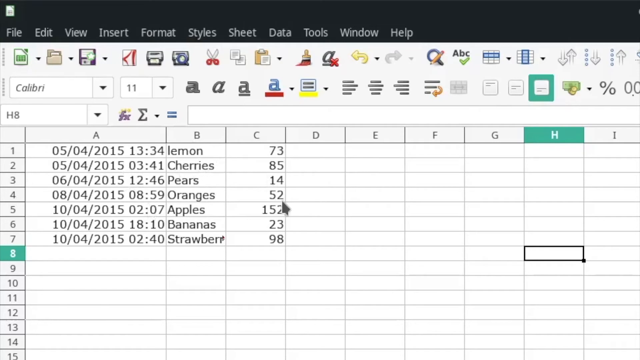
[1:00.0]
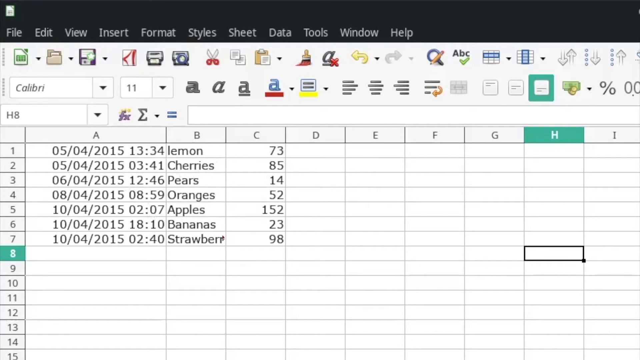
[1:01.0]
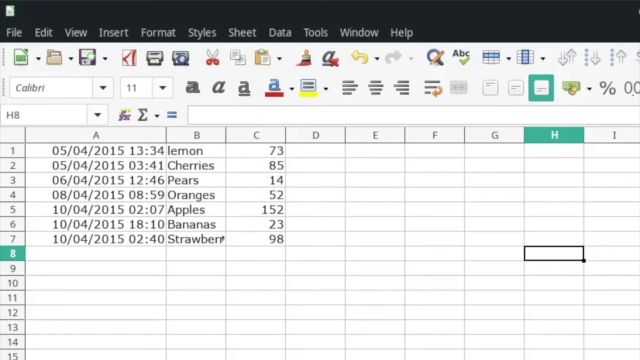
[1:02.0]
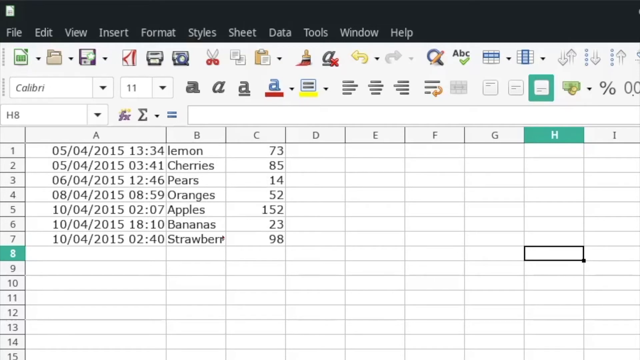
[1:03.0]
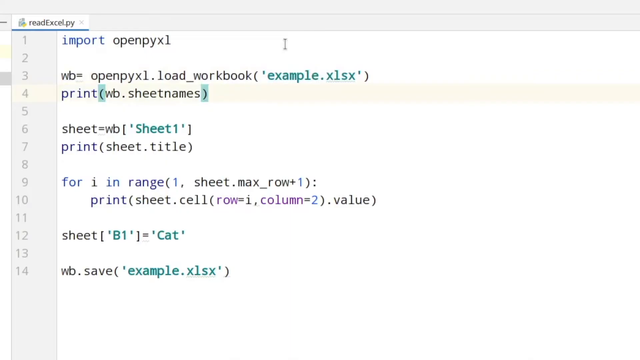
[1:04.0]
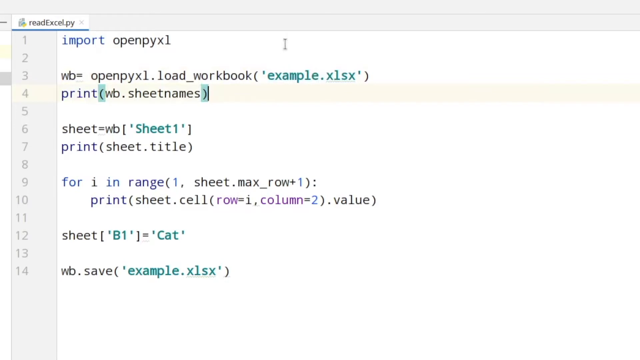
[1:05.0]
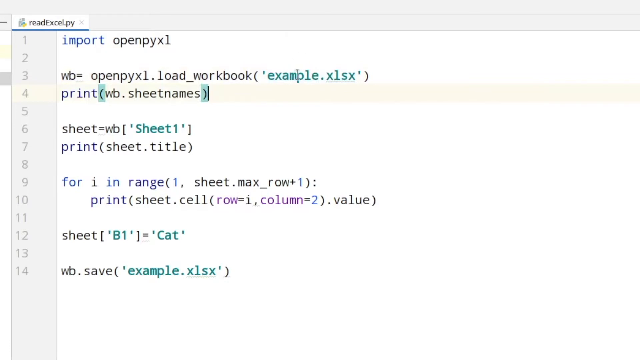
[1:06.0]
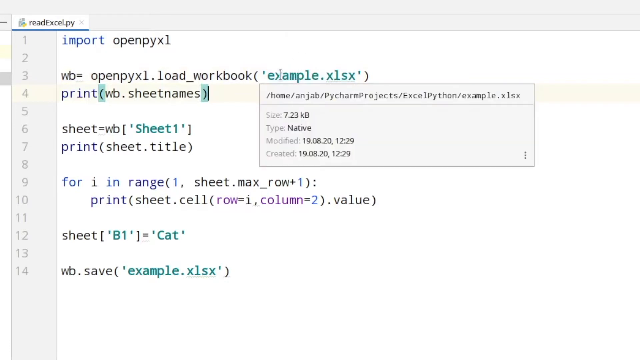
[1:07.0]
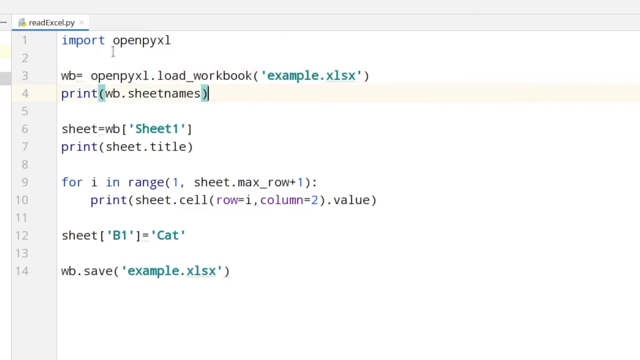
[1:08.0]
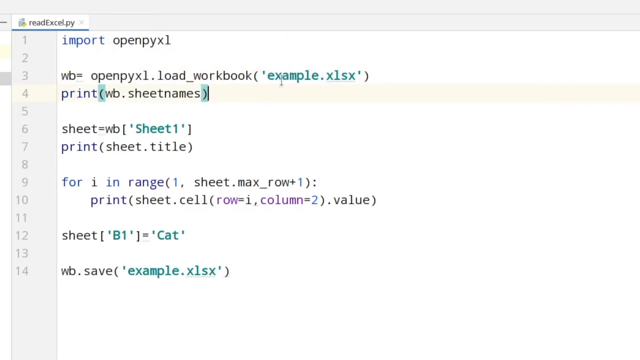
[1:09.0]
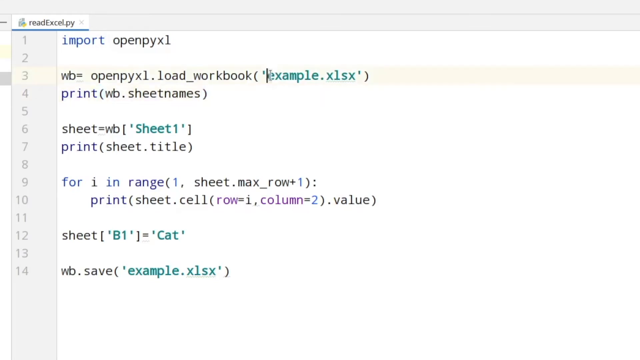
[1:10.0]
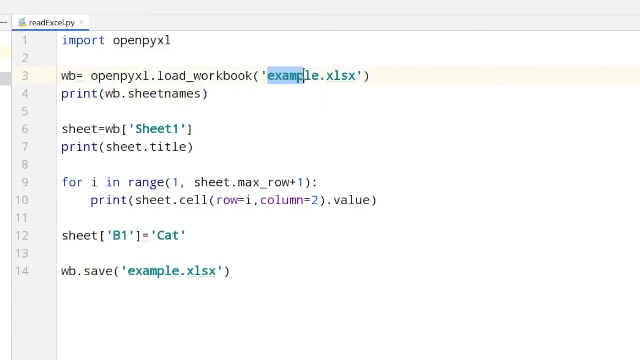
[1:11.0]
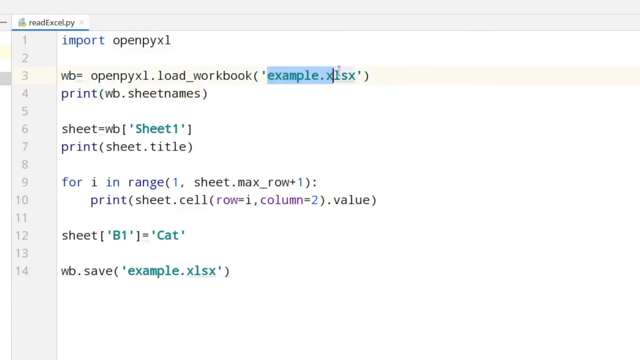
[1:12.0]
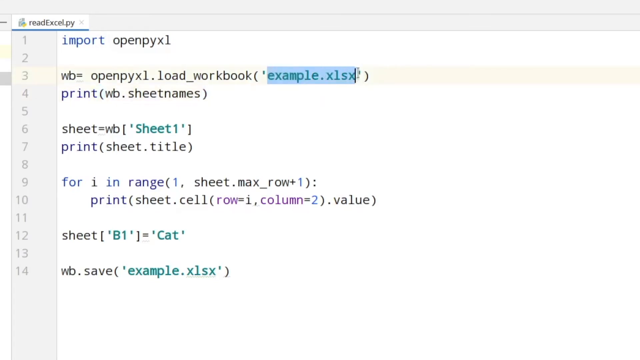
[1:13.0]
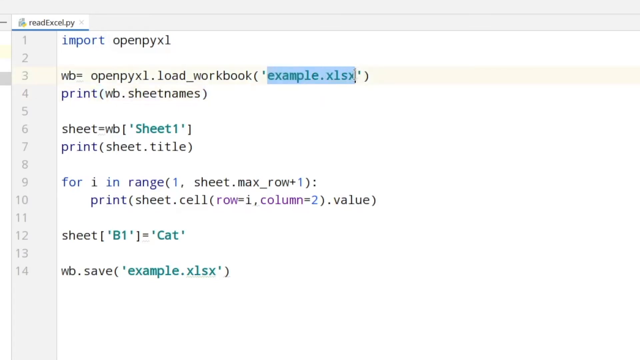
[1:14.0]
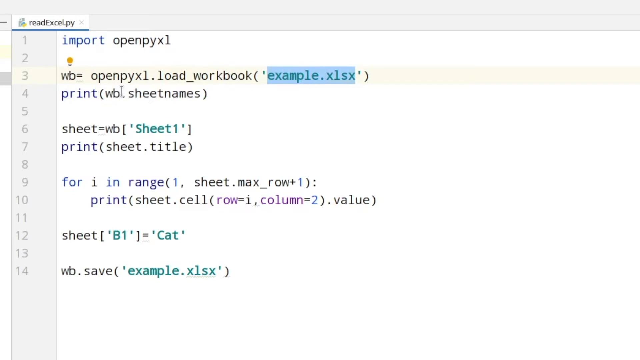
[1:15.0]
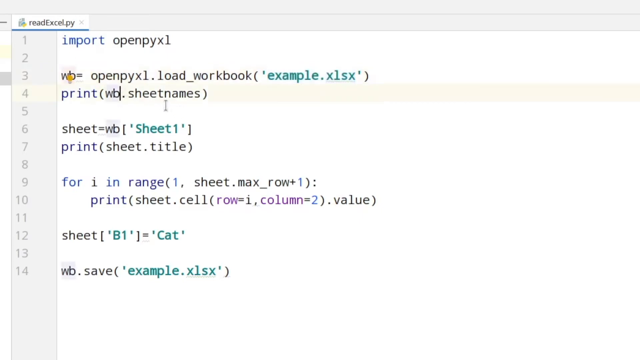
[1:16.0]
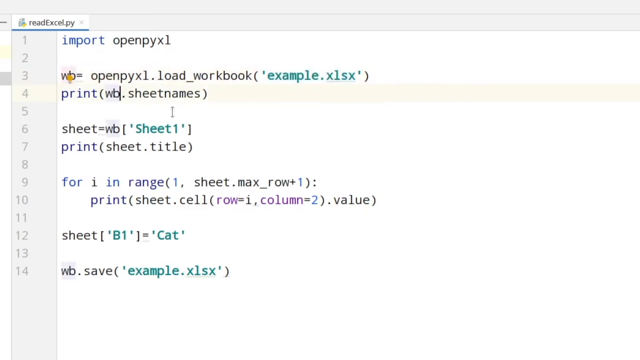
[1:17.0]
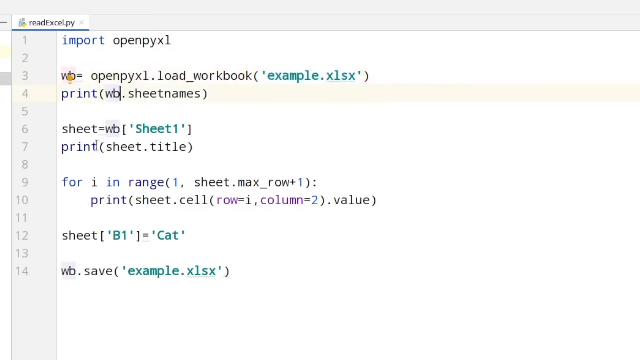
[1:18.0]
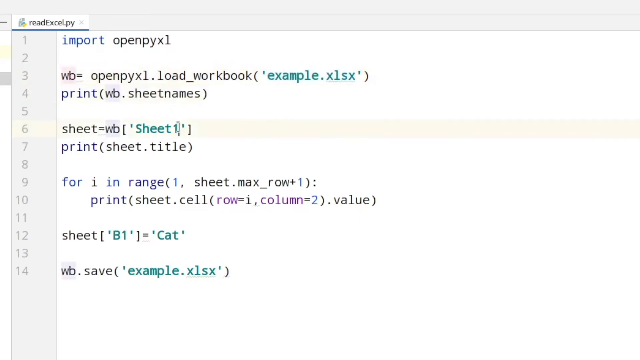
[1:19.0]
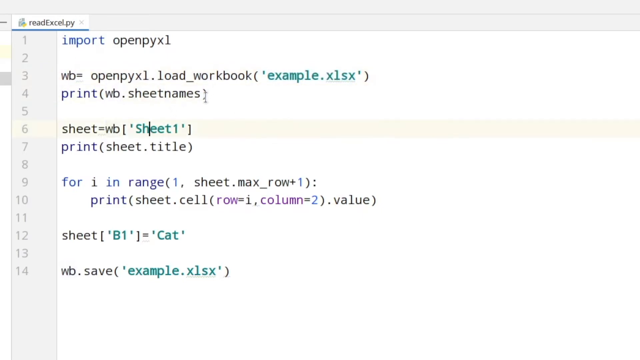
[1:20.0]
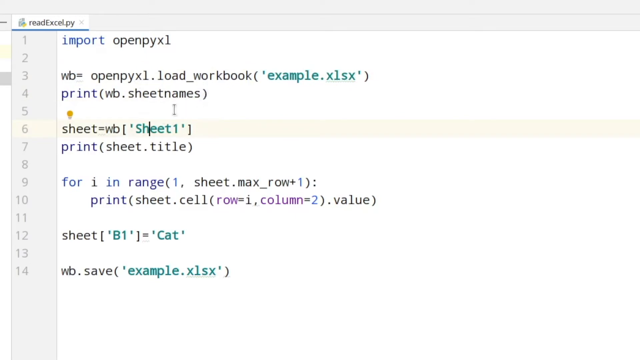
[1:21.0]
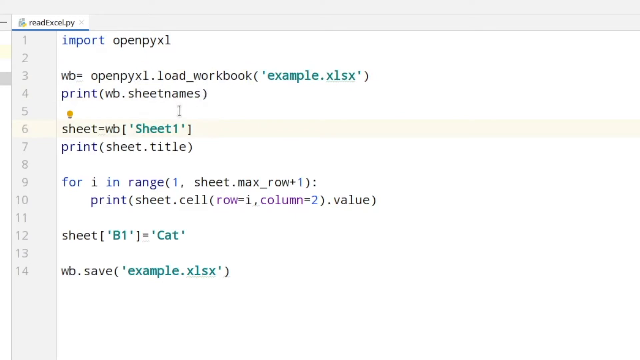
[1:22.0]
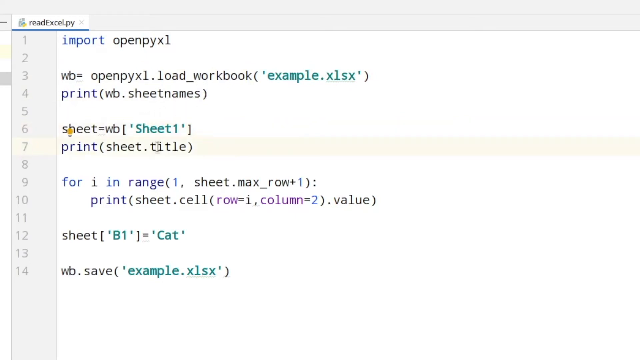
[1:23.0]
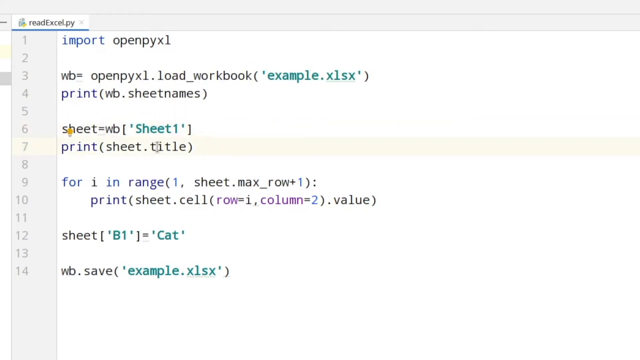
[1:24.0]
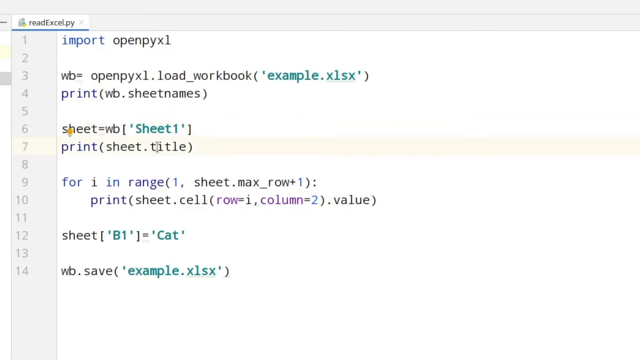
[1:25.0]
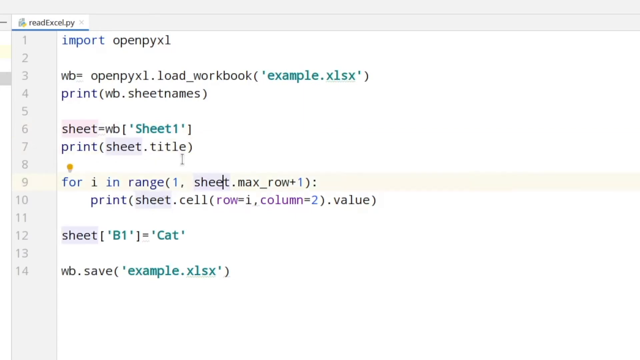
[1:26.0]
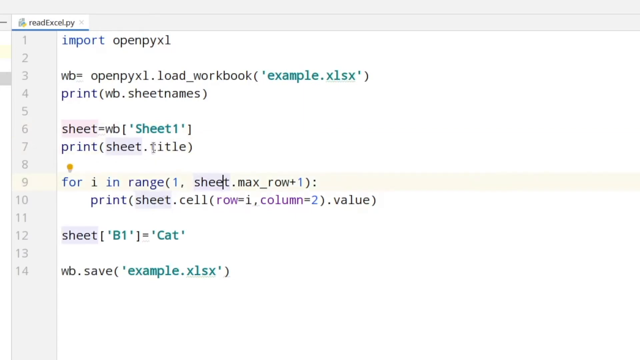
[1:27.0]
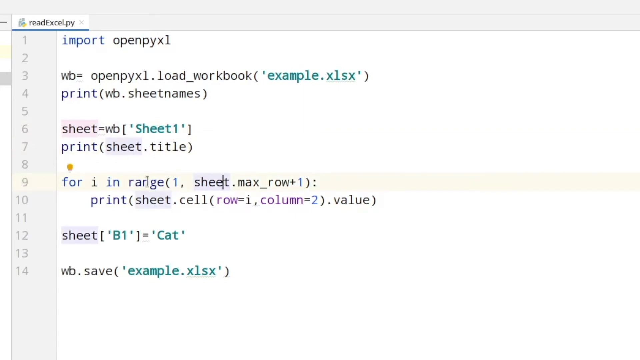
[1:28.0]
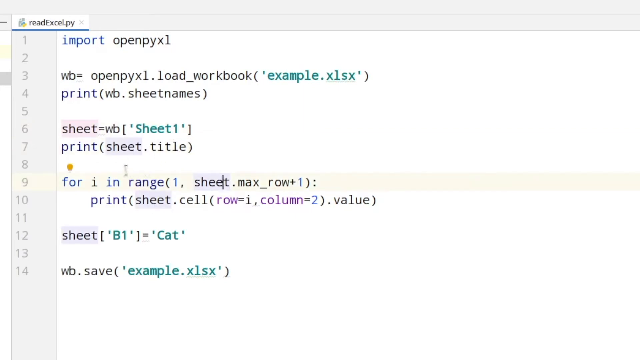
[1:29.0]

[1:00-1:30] A computer screen has a black strip at the very top with the words "file, edit, view, insert, format, styles, sheet, data, tools, window" and "help" in light gray. Below it the page turns white, and just underneath the black strip is a row of 16 icons, including ones that look like a pair of scissors, ones that look like computer disks, a couple that are just arrows, a paintbrush, and one that says "abc" with a check mark underneath. Below that row is a small white space that says "Calibri," beside it a small white rectangle with the number 11, and beside that the letter A in different fonts. Underneath are more clear white spaces, and below them are columns labeled A to I across and rows numbered 1 to 15 going down.